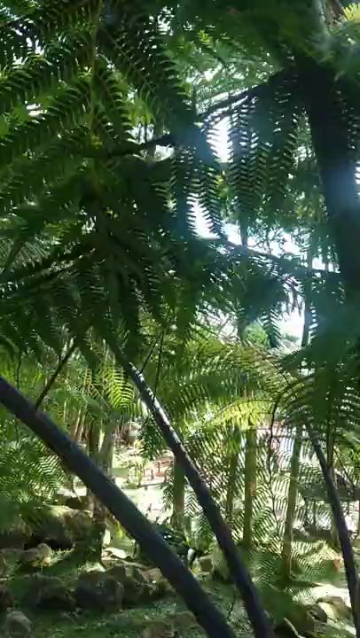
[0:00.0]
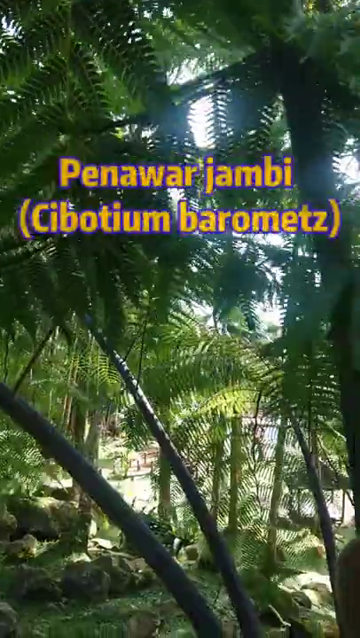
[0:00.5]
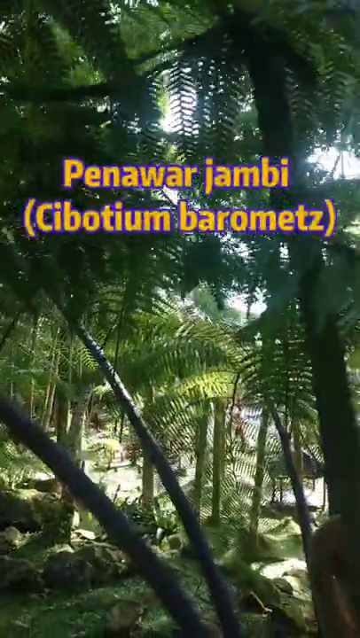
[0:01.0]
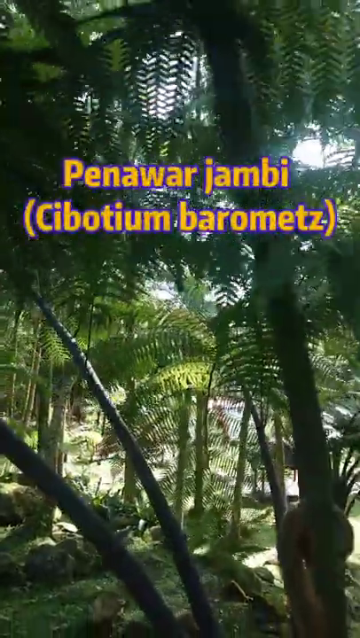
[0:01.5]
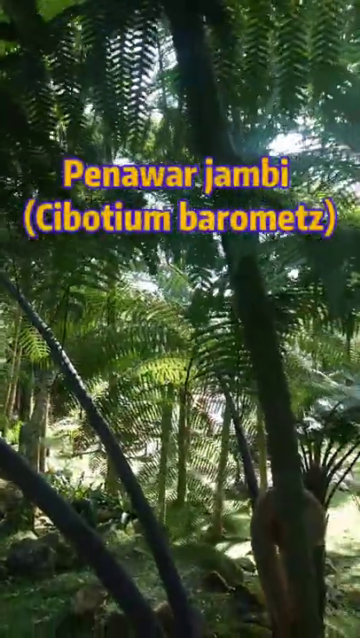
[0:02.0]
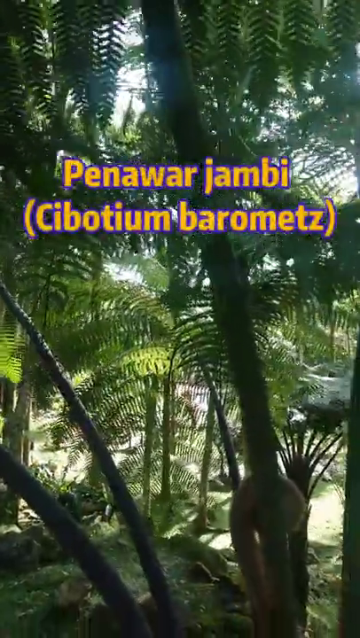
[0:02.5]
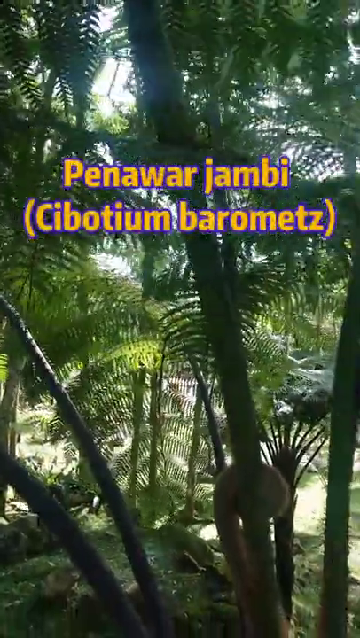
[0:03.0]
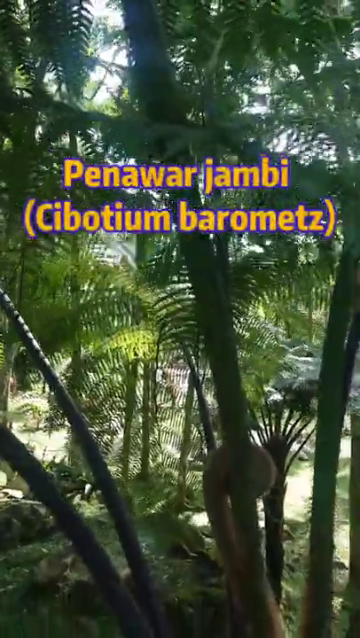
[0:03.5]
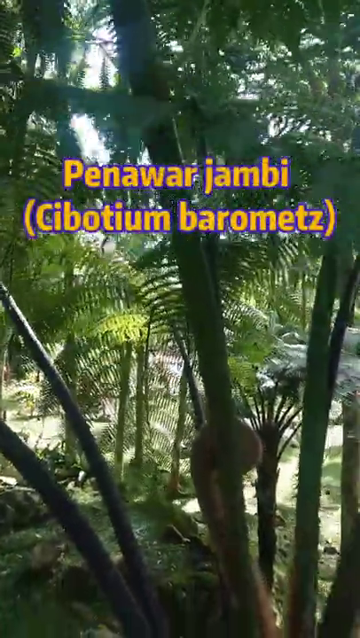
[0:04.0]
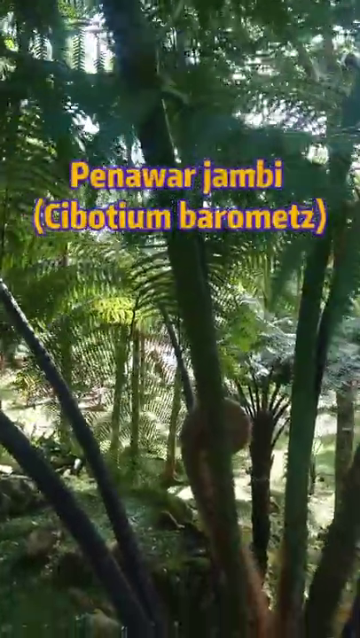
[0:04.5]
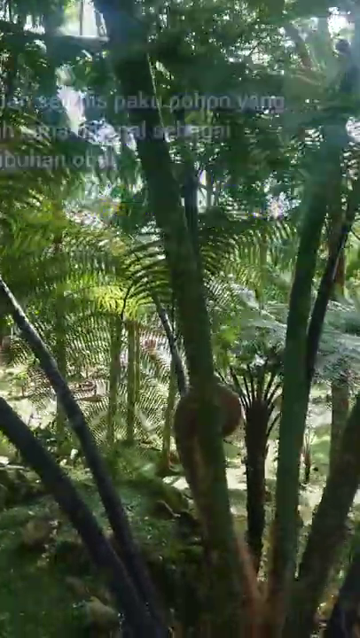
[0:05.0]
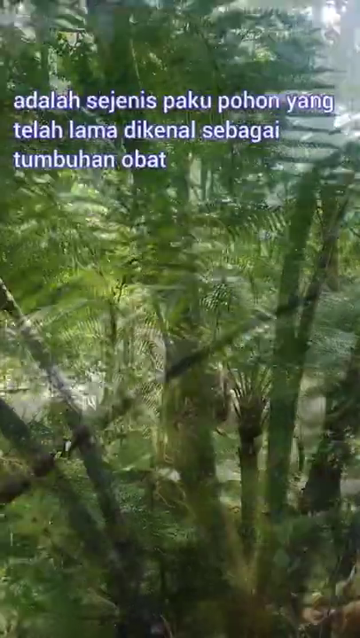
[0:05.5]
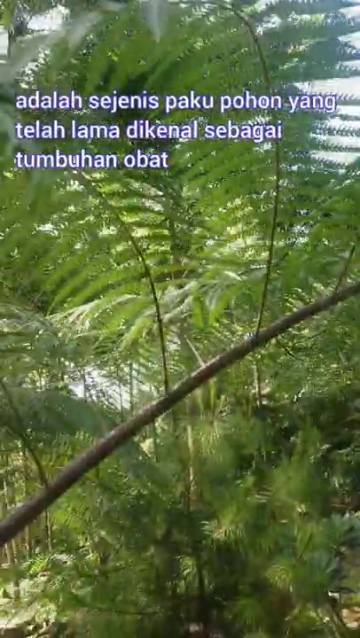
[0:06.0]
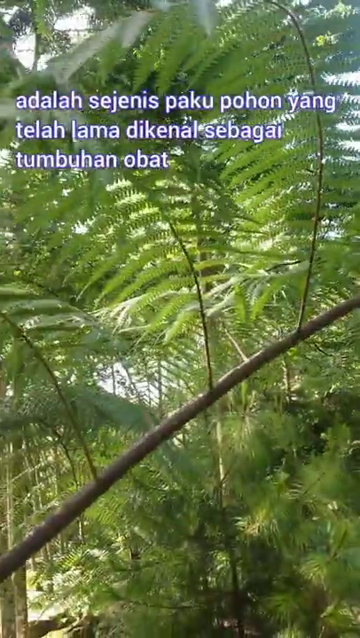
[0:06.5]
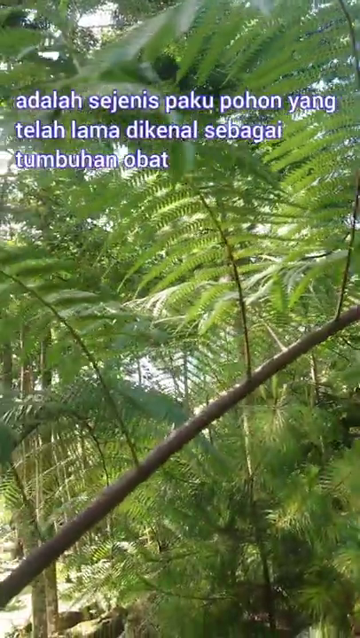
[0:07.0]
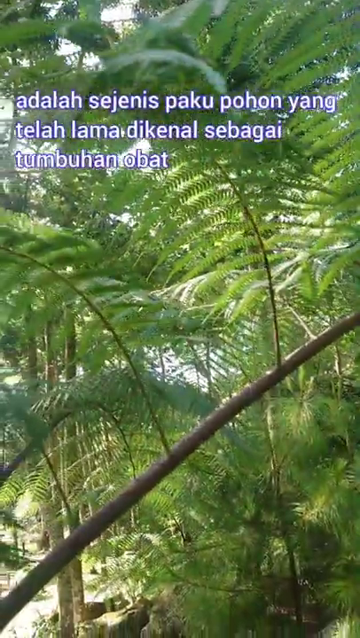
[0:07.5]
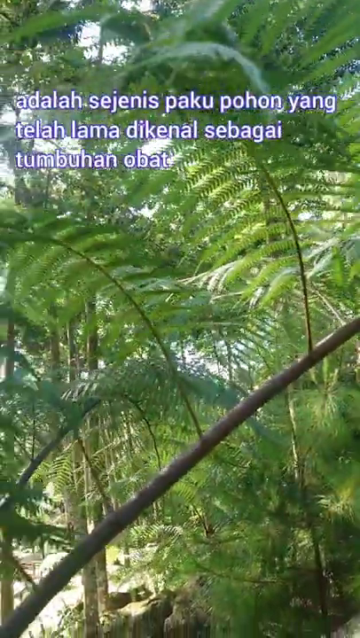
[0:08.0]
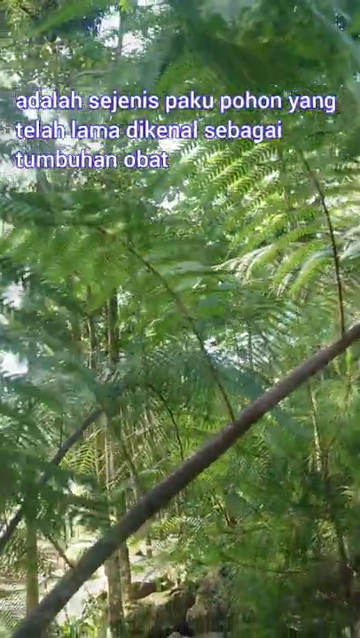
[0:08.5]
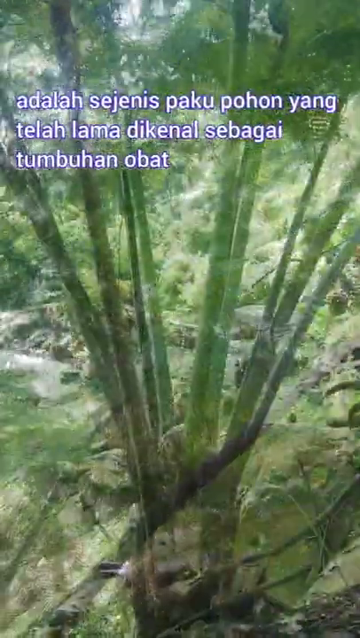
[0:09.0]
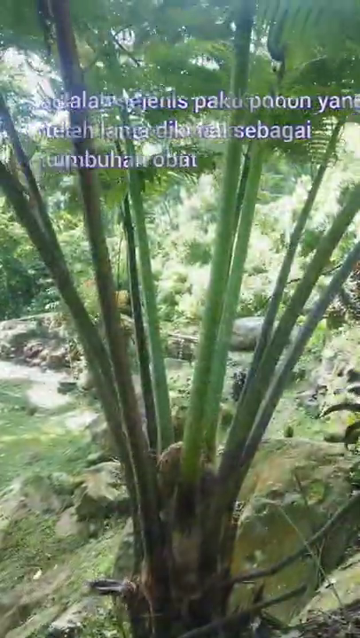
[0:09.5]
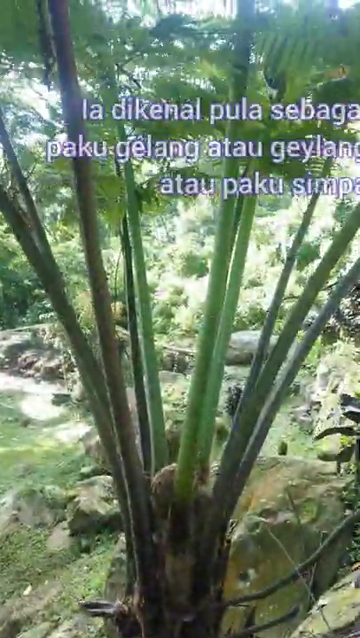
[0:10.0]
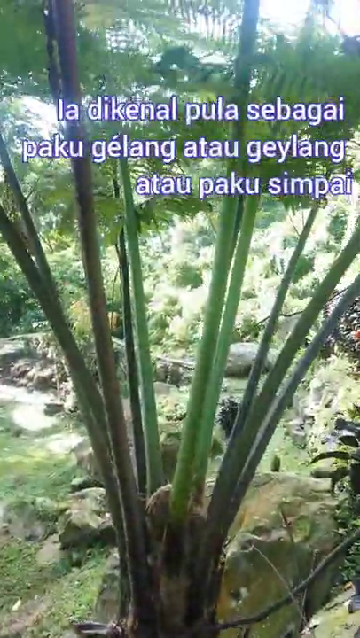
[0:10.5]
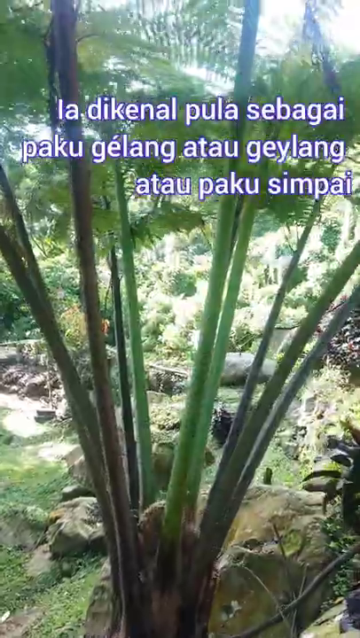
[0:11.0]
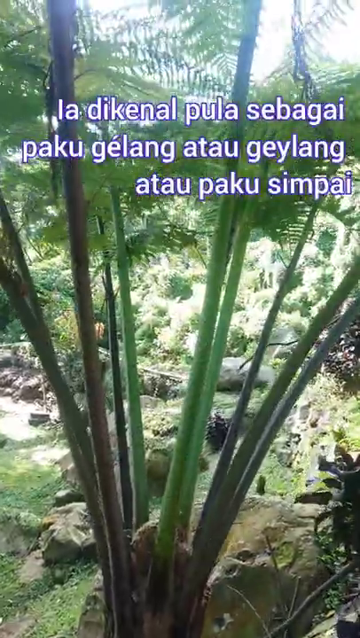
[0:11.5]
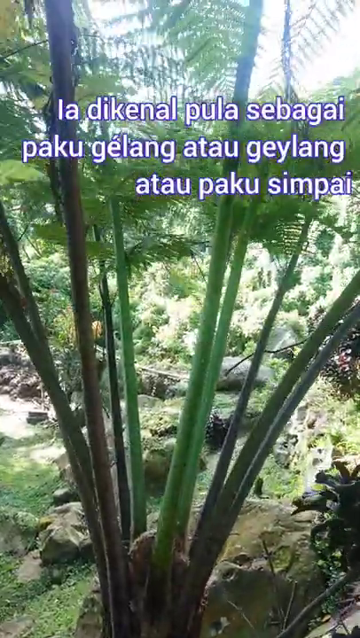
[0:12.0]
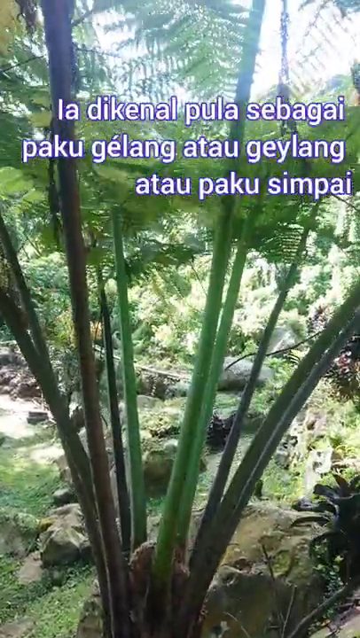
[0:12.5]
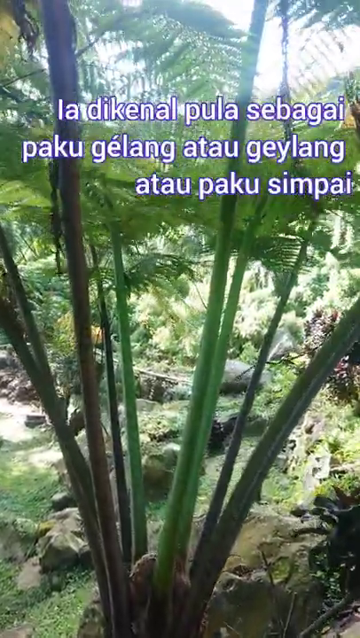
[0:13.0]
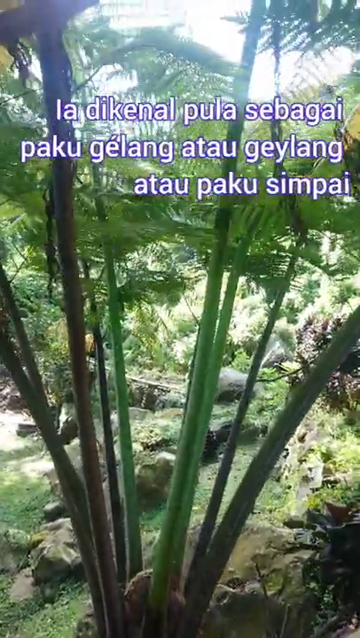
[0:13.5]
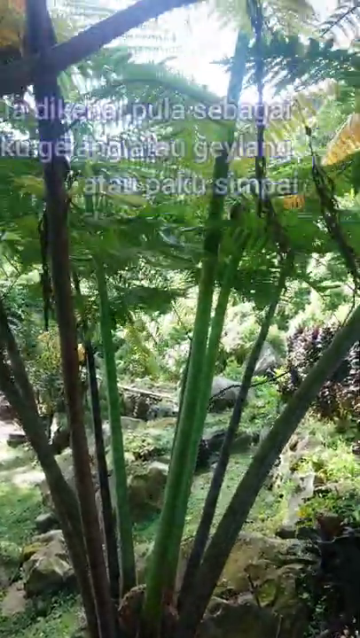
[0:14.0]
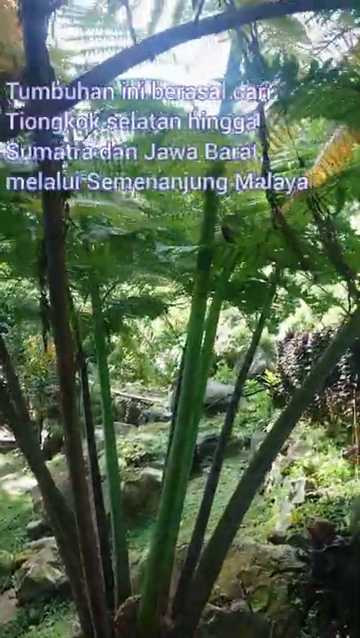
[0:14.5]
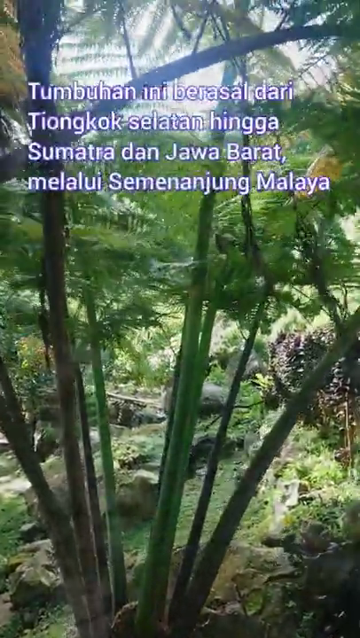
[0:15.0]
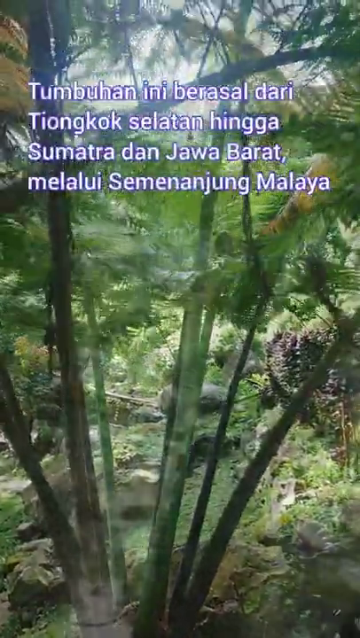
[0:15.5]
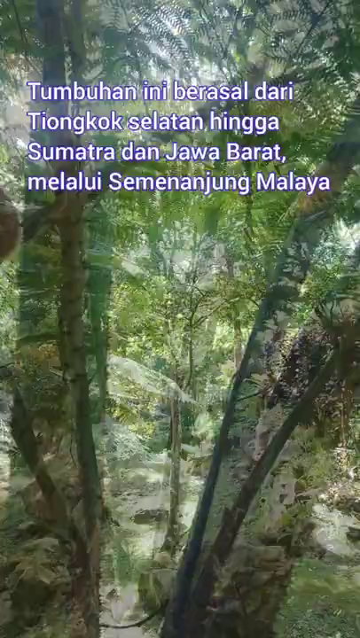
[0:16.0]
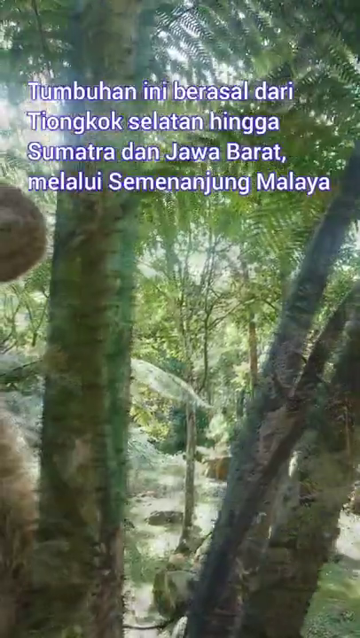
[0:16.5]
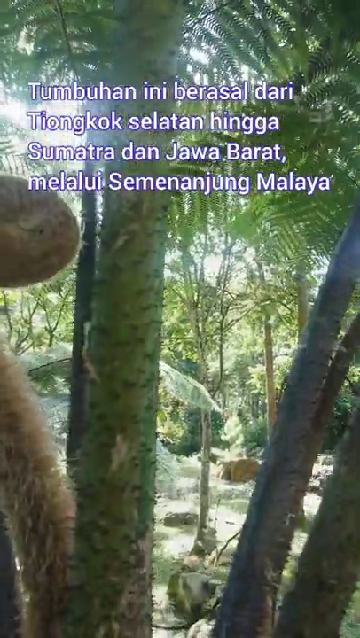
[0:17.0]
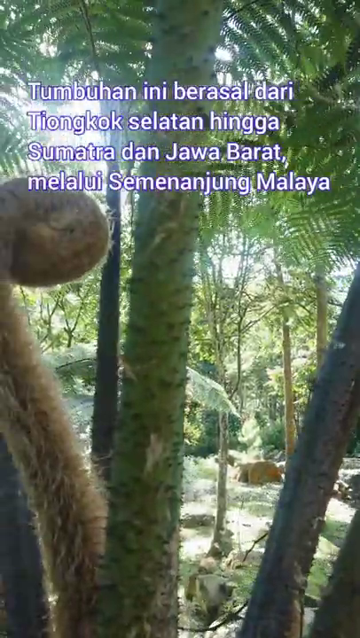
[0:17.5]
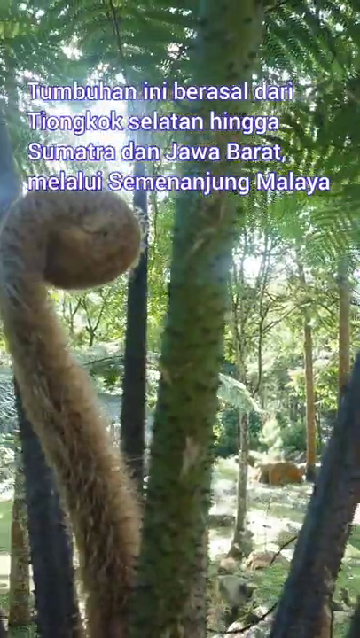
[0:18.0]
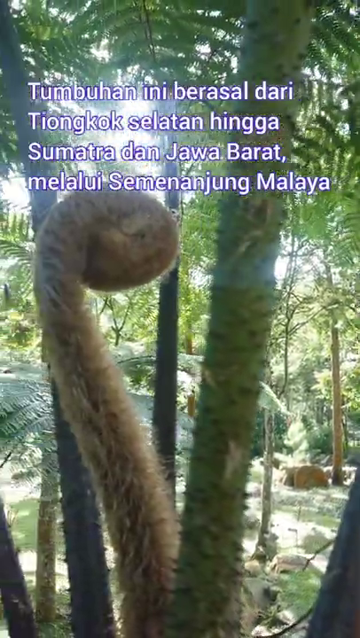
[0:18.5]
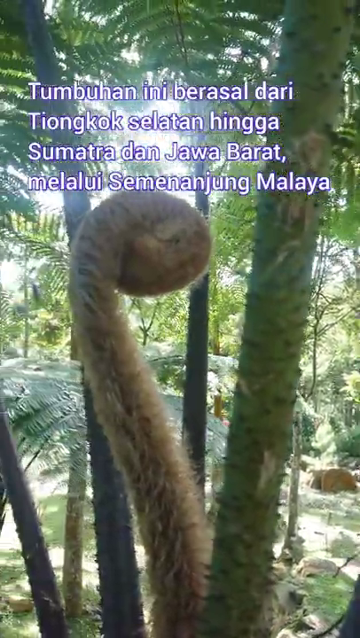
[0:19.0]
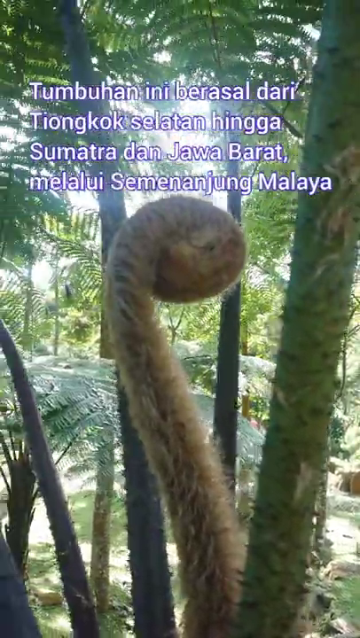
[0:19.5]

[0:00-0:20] The video appears to have been taken in a tropical rainforest. At the start, various trees appear with sunshine streaming through them. Text then appears on screen, followed by another word or phrase in brackets, possibly a plant name. The camera moves through the undergrowth, where there seems to be a mixture of palm trees and ferns. More text appears, possibly in Malay. The view then looks up into the branches of what seems to be a very large fern, and another block of text appears. There is plenty of greenery in this very dense forest, and there are some rocks on the ground.